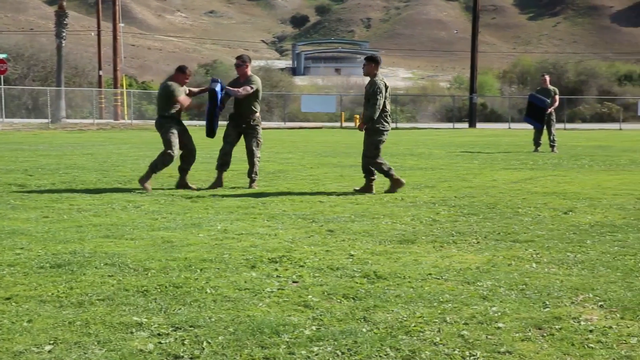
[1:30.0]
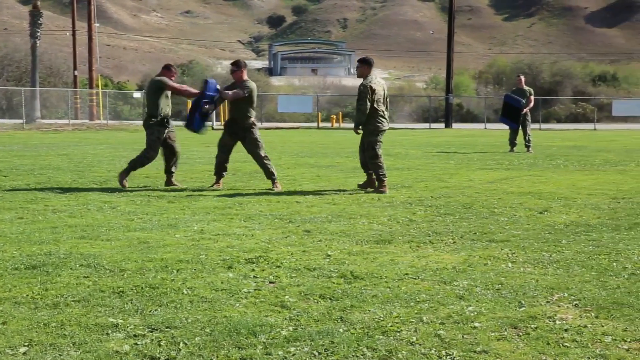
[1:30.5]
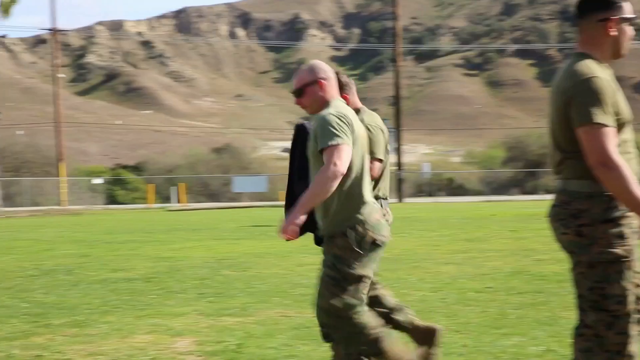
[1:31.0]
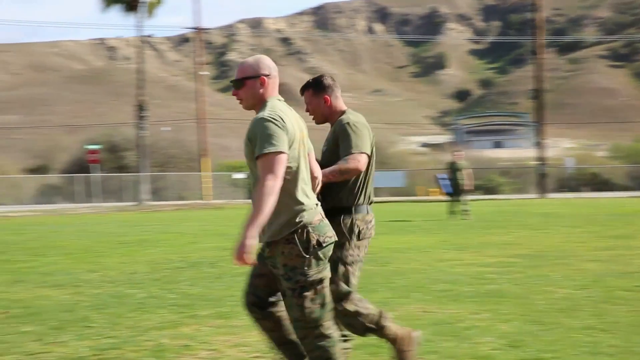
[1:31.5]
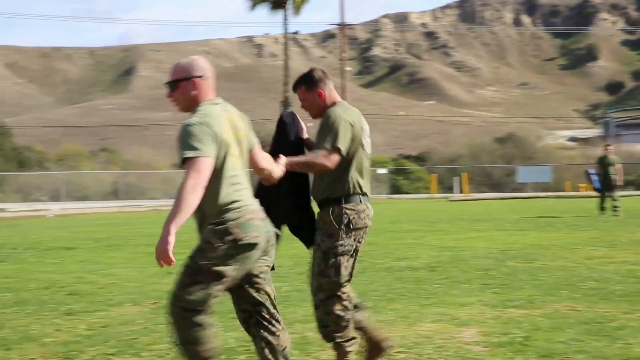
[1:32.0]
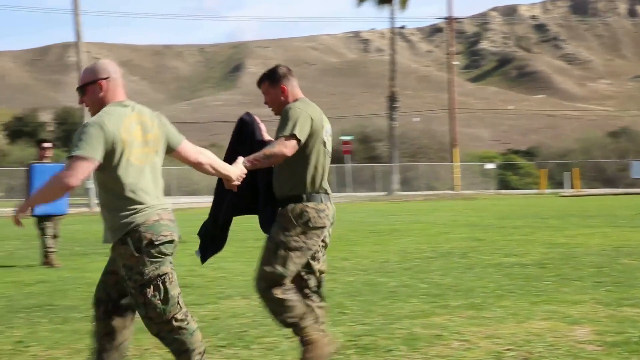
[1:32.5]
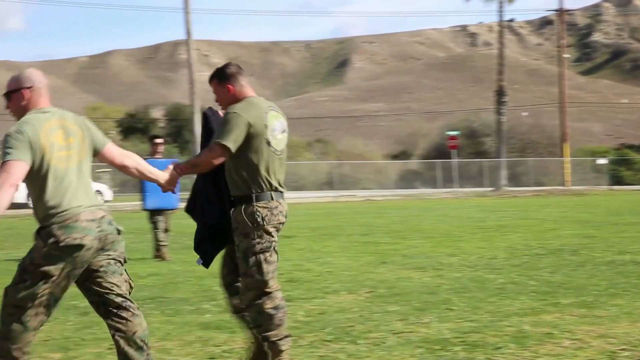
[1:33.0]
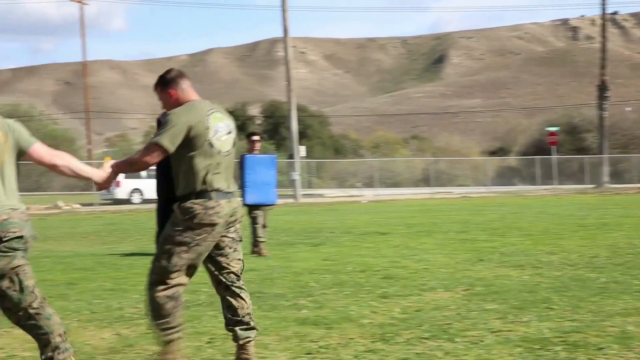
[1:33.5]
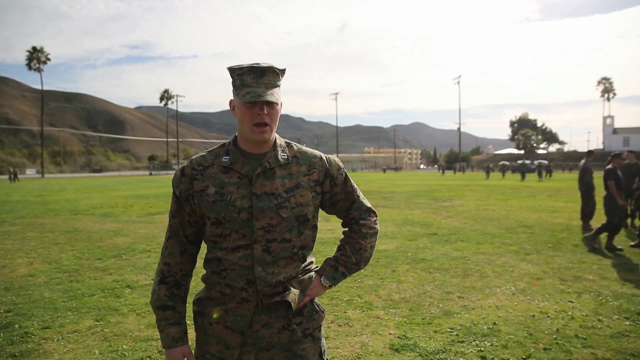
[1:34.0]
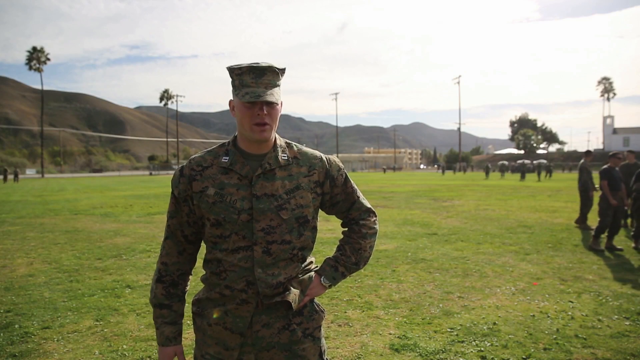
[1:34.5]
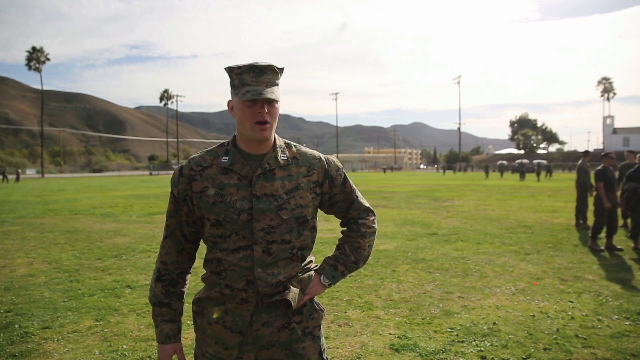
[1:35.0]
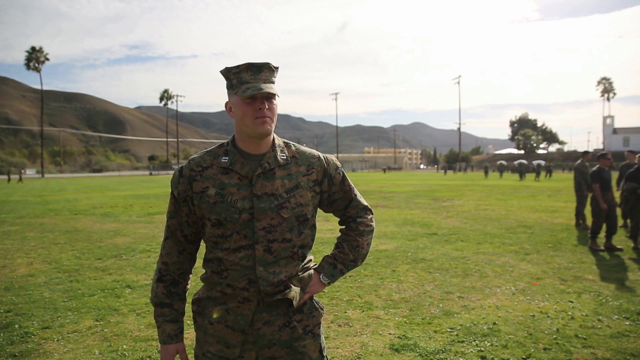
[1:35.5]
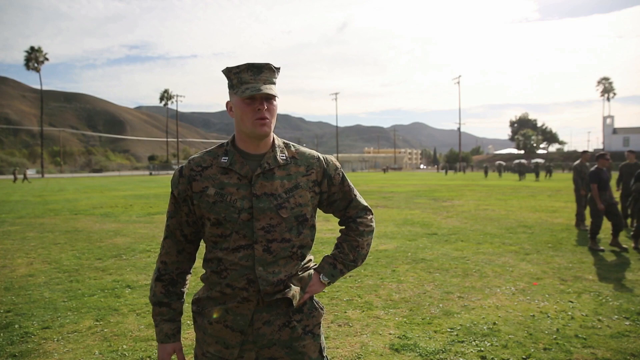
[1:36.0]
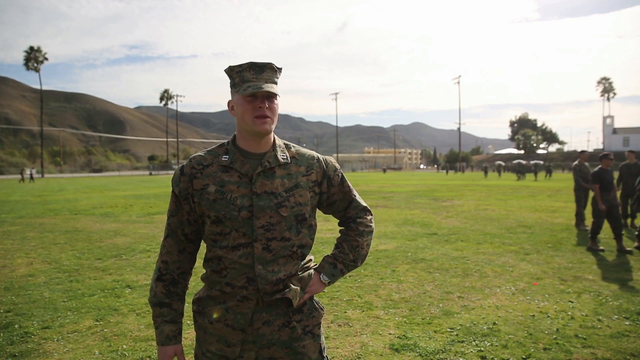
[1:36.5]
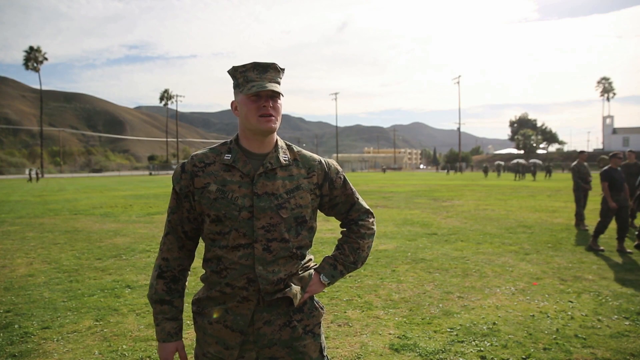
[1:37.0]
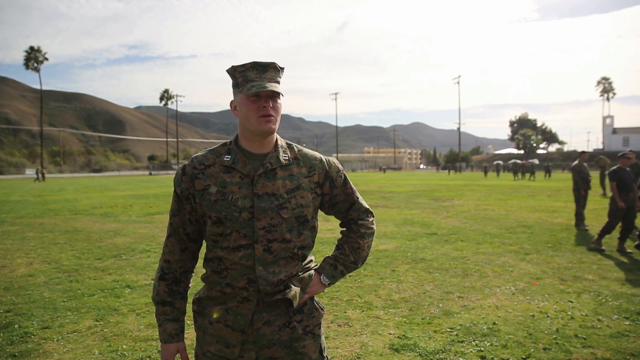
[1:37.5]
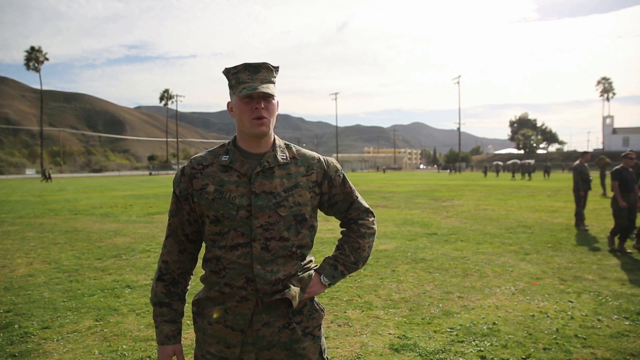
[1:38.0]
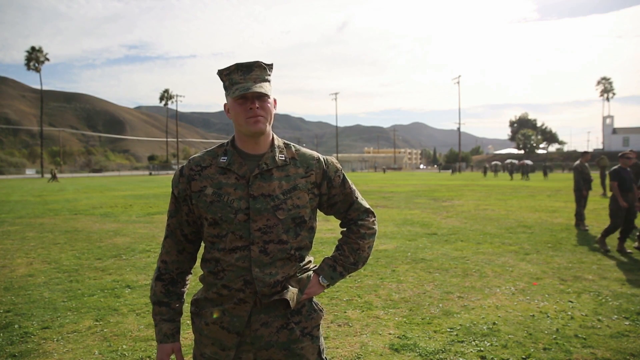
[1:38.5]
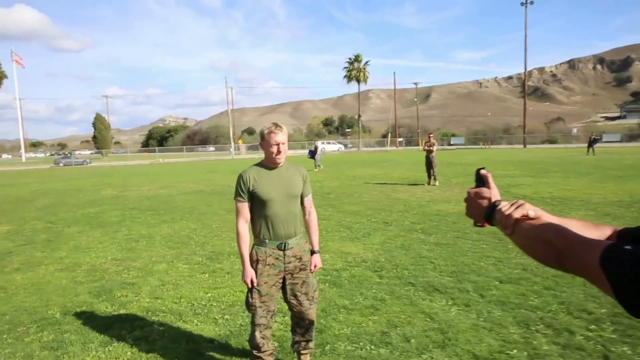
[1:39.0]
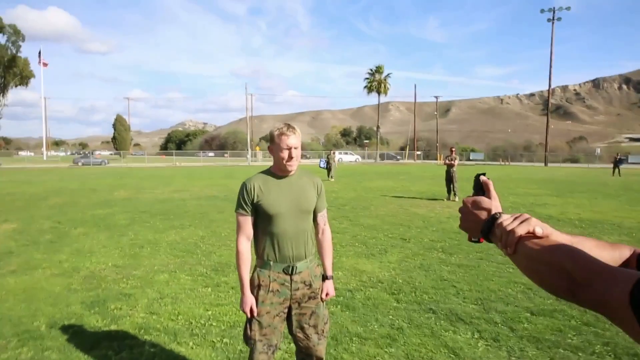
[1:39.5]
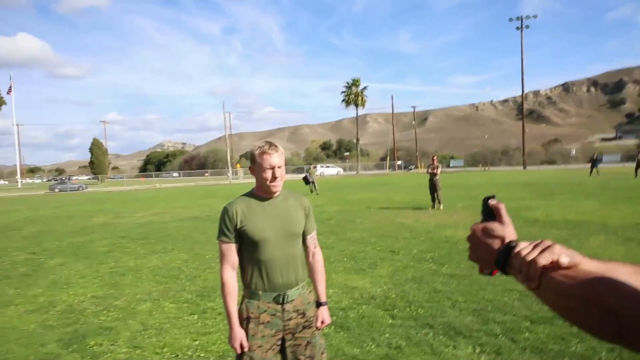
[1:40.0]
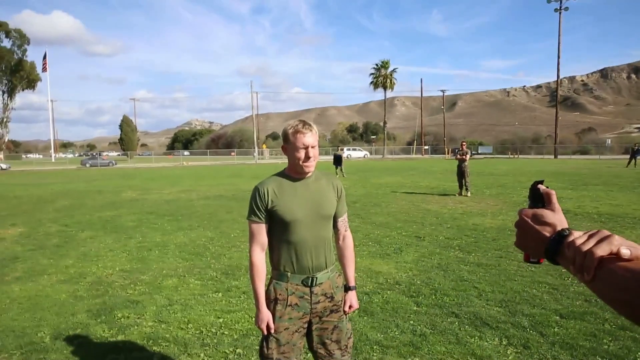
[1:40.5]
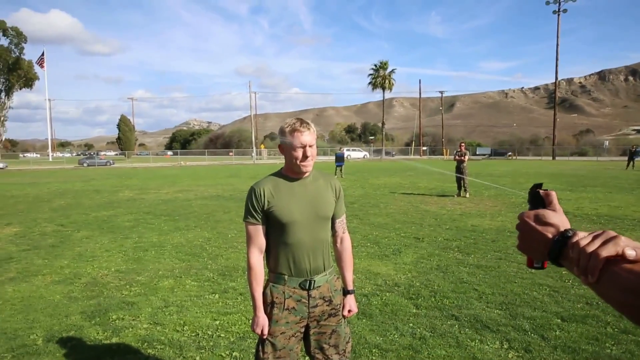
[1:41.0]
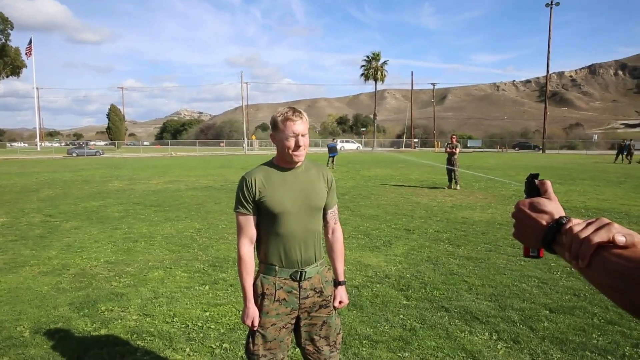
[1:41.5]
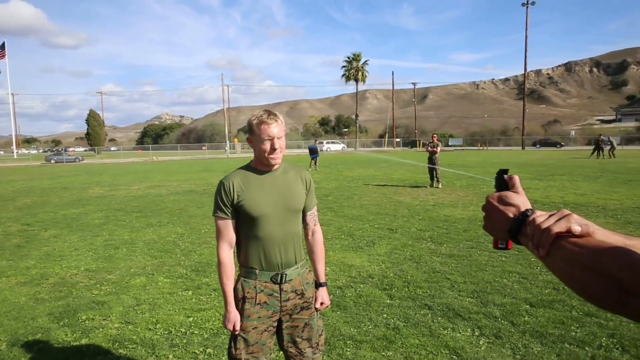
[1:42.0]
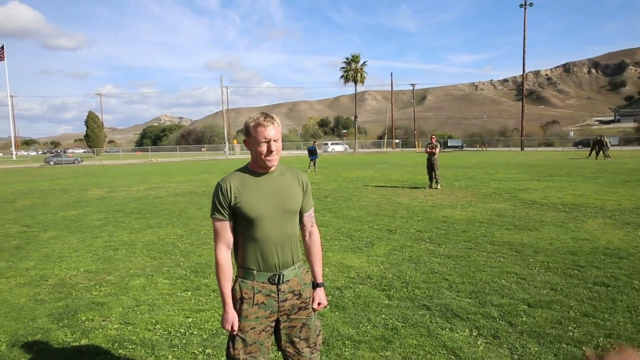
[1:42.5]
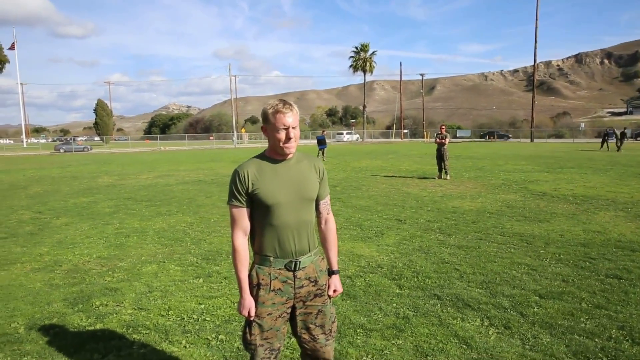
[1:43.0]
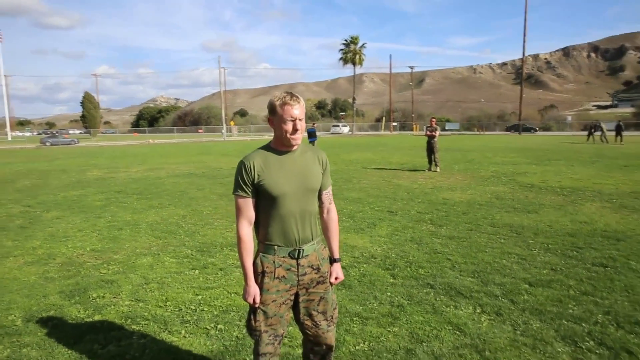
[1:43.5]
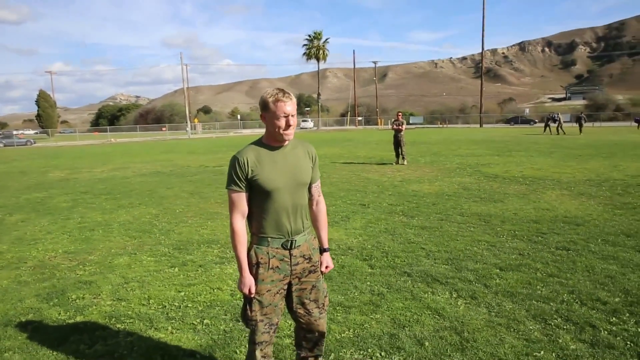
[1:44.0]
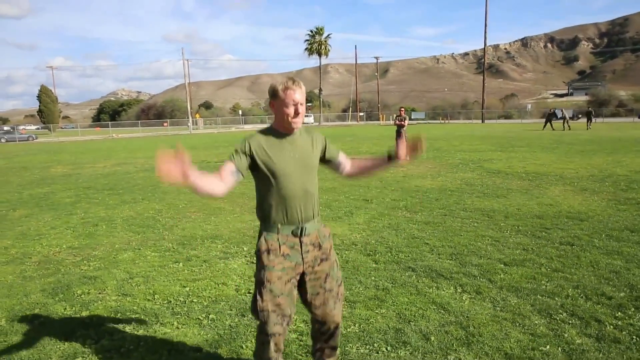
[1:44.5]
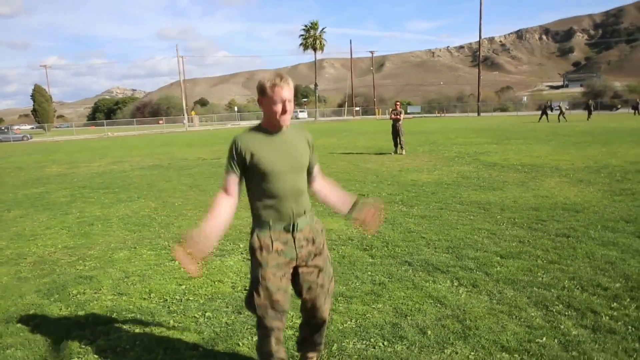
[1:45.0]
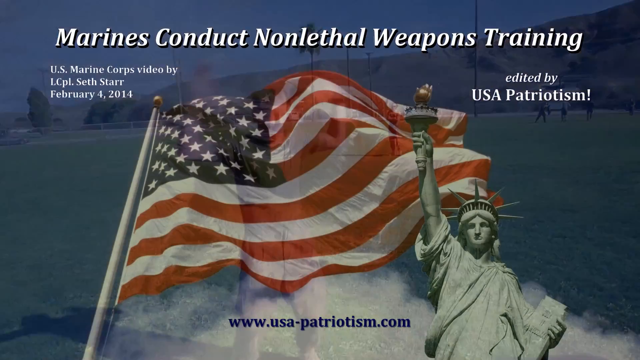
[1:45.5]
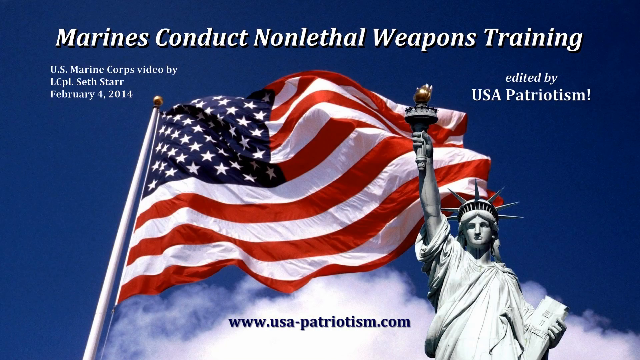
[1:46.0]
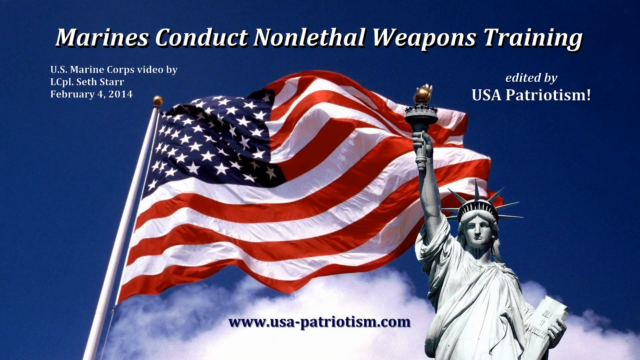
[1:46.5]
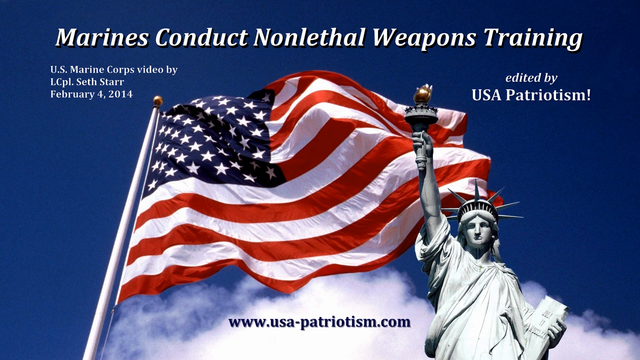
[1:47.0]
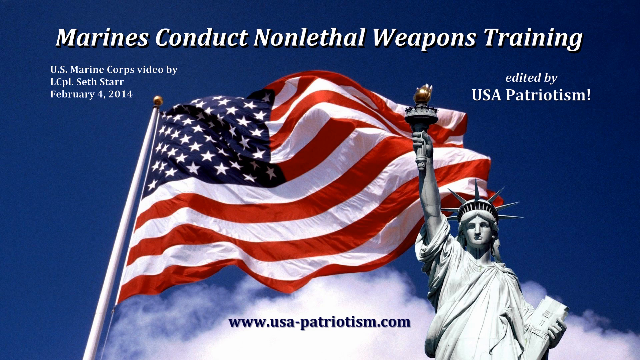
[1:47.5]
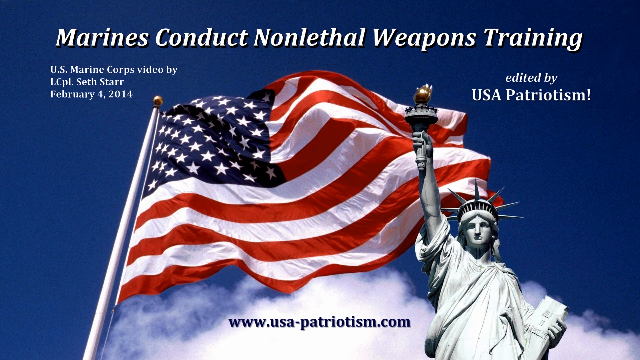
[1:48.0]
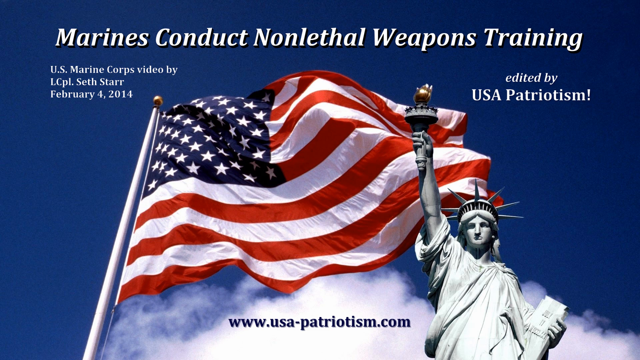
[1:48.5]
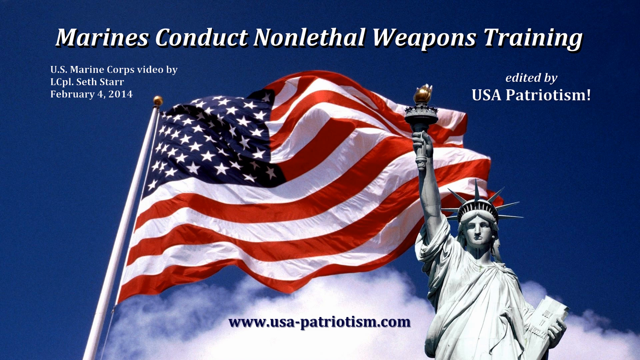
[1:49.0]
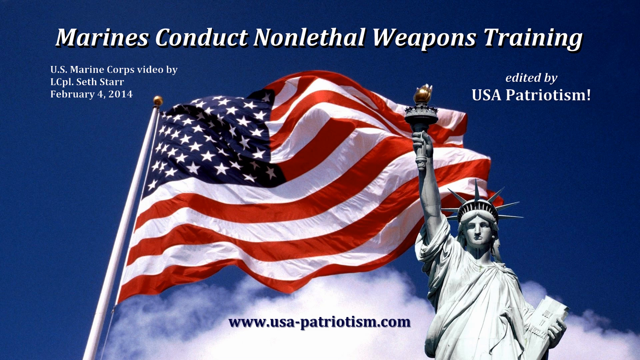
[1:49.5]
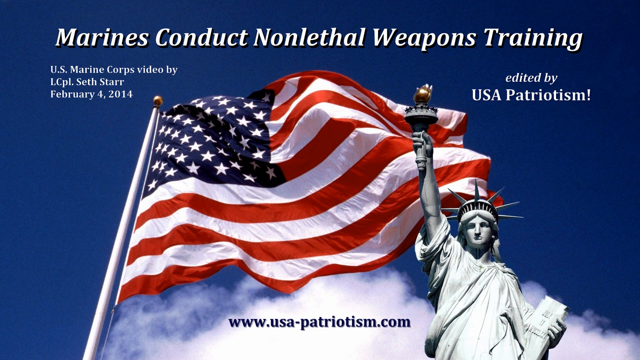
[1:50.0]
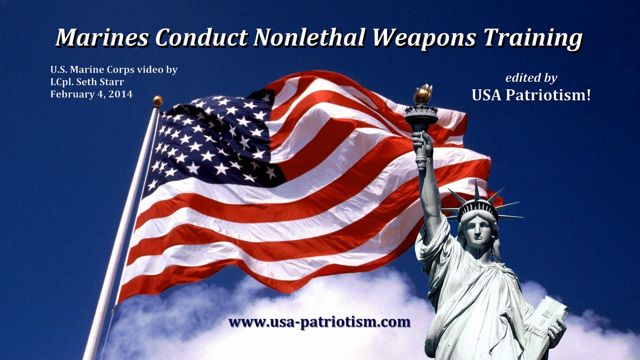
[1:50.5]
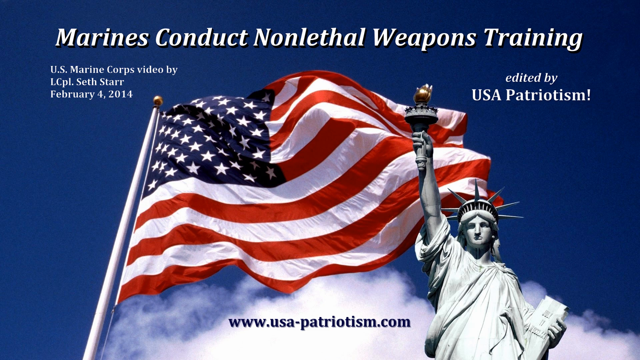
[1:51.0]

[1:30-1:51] Another trainee faces someone holding a blue pad that blocks the impact. From right to left, someone guides one of the trainees off the field; his eyes seem irritated and look closed, and he appears to need assistance walking. The video returns to the Marine in his full camouflage uniform with a hat. He has his left hand on his hip, his watch is showing, and he has two pins on either side of the lapel of his camouflage uniform, with a green shirt underneath, as he talks to the camera. Fewer recruits remain in the background, walking around. A different recruit stands wearing camel pants, a belt and a green shirt, being sprayed in the eyes, apparently with pepper spray; his eyes are closed and his fists are clenched. The person spraying him stands off camera to the right, with only their left arm visible, and sprays the man, who is in the center of the field, in the face. He is then instructed to do his jumping jacks. The video ends on a credit screen that says "Marines conduct non-lethal weapons training," "US Marine Corps video by Lieutenant Corporal Seth Starr," with a date that appears to be February 4, 2014, and "edited by USA Patriotism!", with the website "www.usa-patriotism.com" underneath. The screen has a blue background that looks like a view of the sky, an unnaturally dark blue, with a cloud. A flag is superimposed over it, with part of a flagpole visible, and in the corner, just to the right of the flag, is a torso-up view of a replica of the Statue of Liberty.